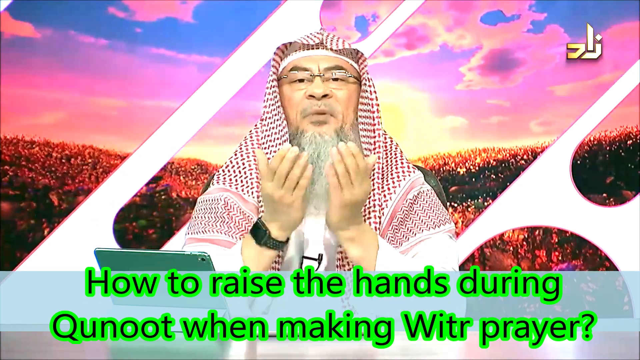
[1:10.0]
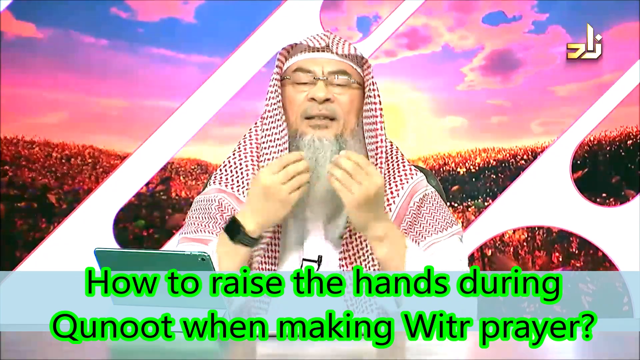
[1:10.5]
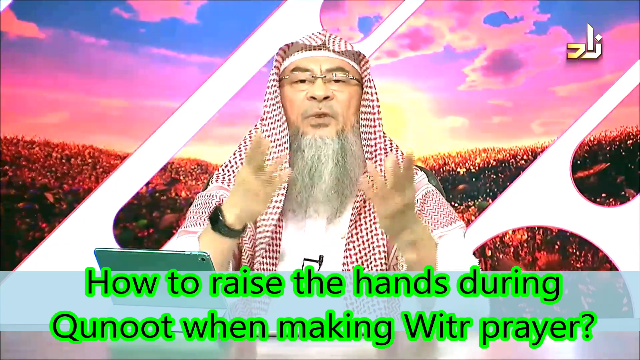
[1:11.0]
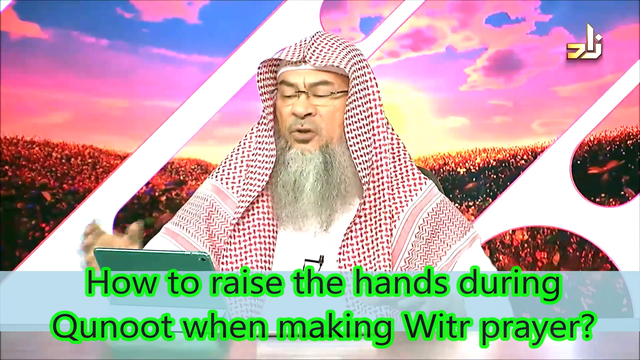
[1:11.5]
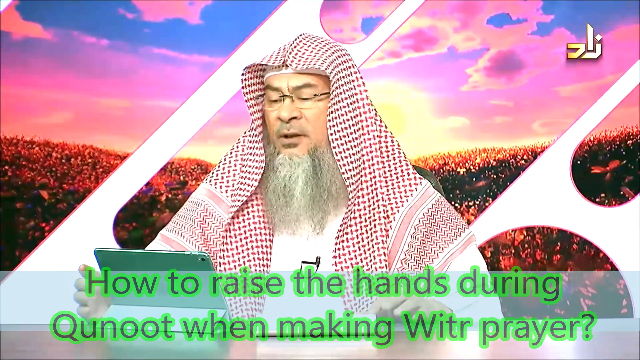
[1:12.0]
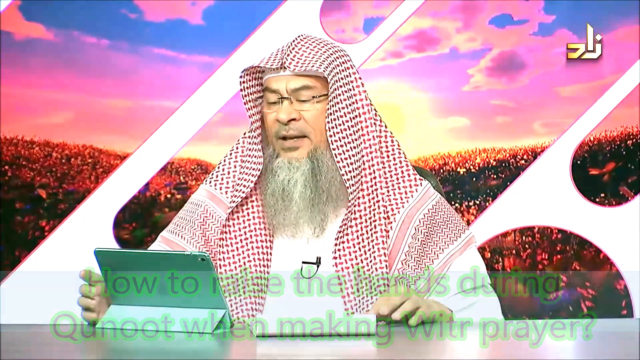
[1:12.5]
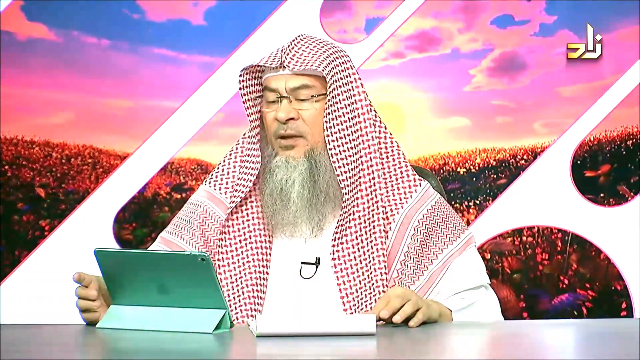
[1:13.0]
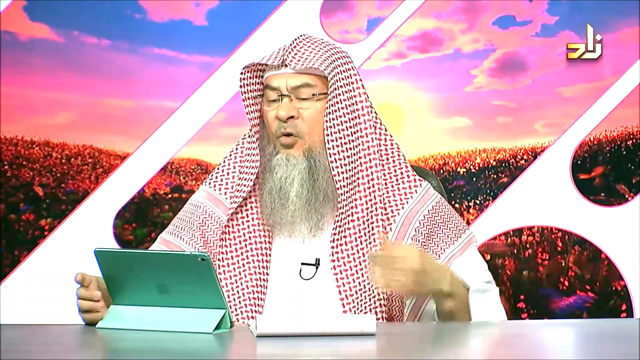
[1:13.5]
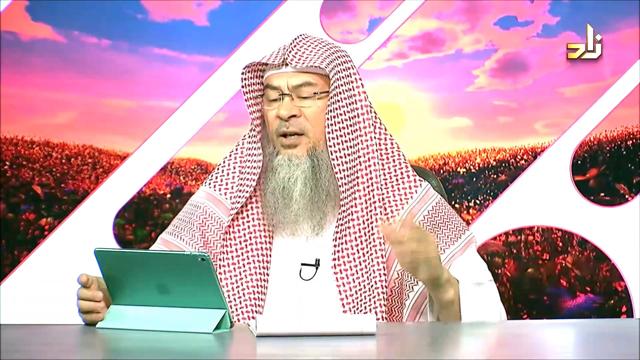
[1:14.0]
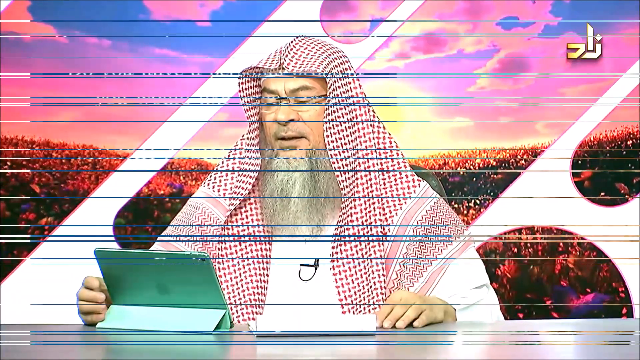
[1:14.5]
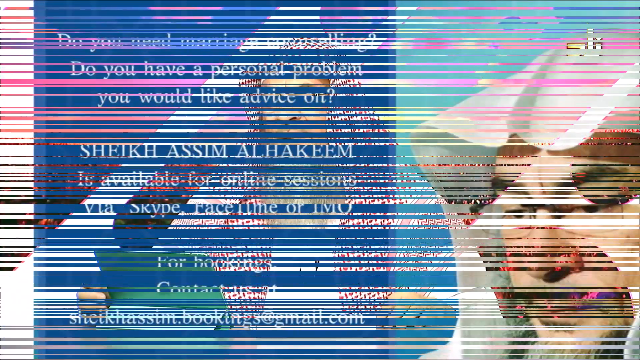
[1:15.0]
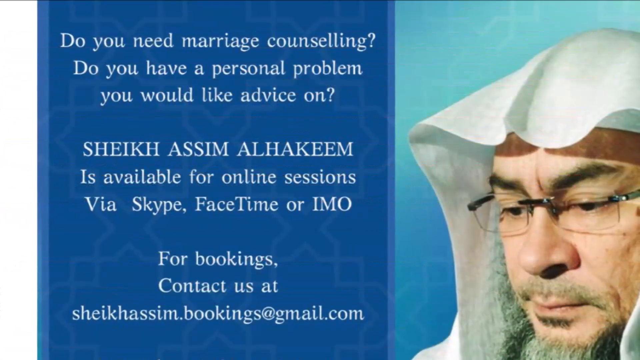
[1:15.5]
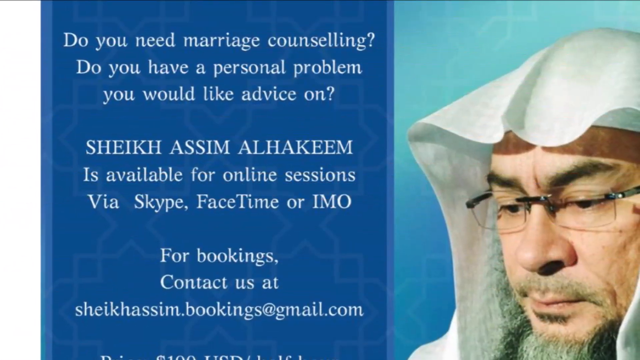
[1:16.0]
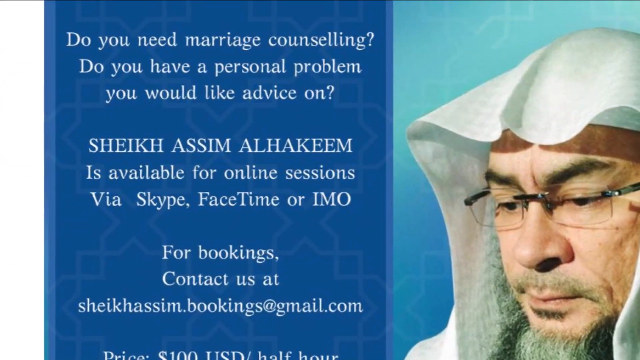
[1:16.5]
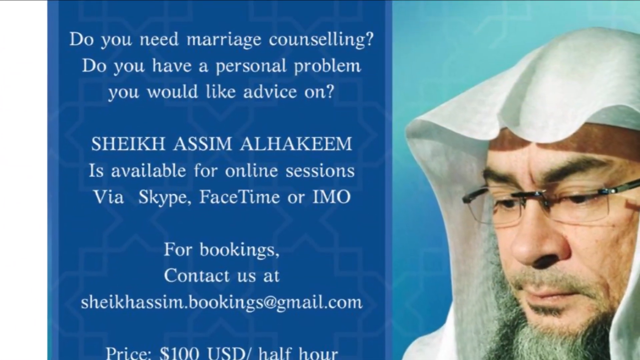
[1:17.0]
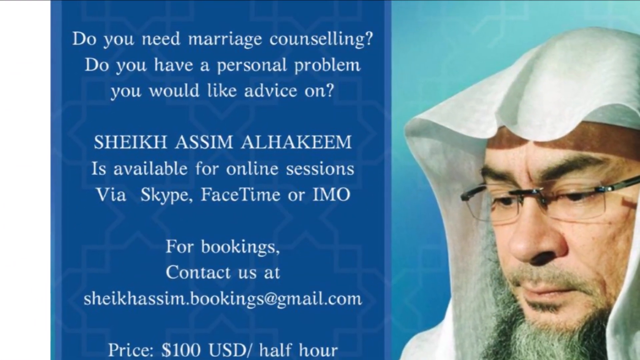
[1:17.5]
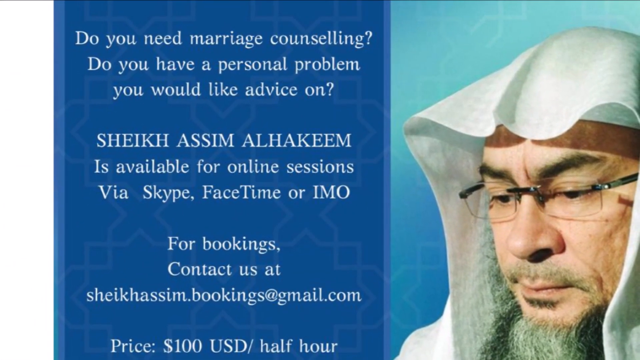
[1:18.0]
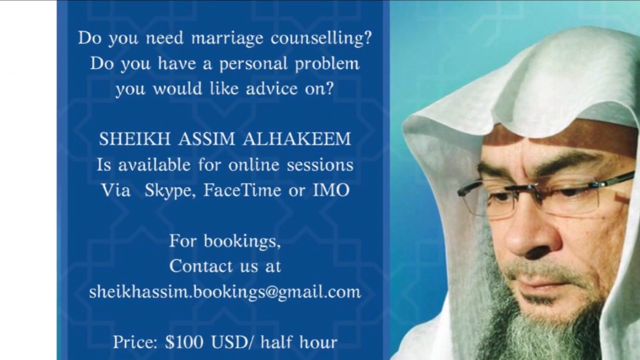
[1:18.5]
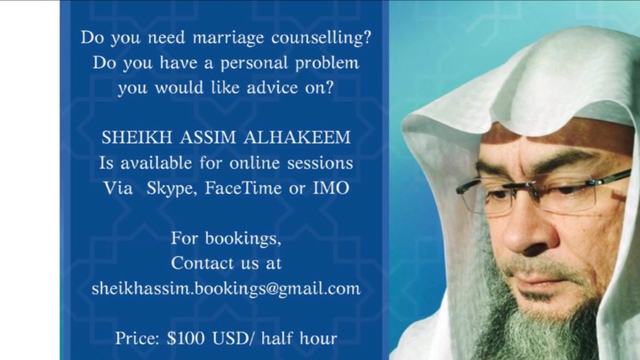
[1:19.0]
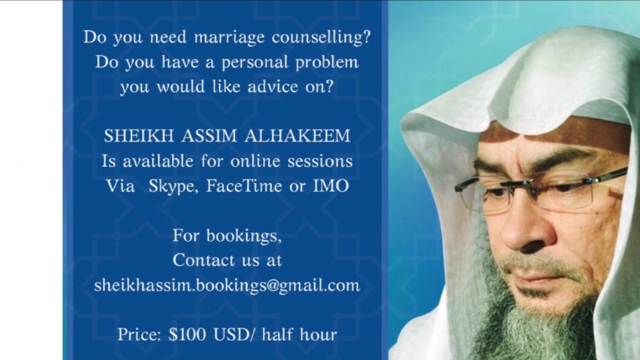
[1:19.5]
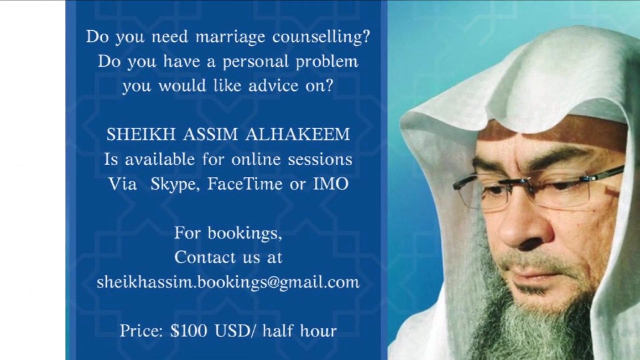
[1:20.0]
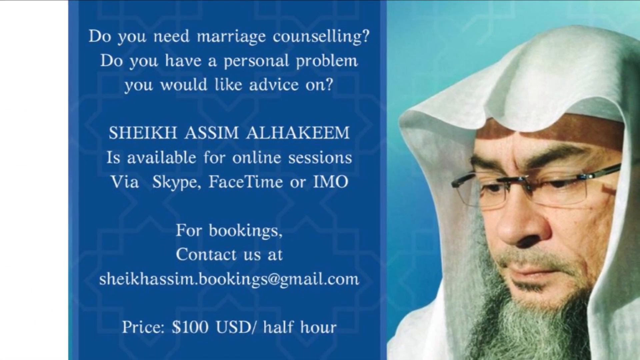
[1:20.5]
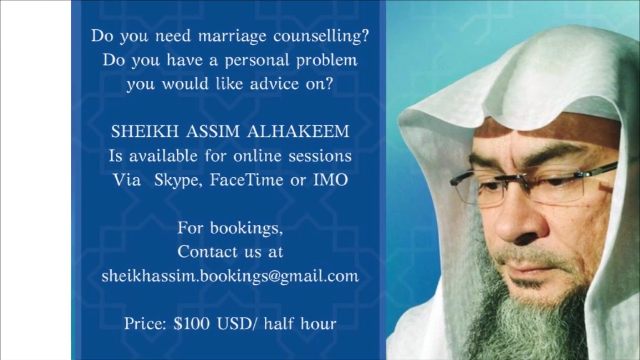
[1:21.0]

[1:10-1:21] The sheikh seems to have finished answering the question, as he lowers his hands. He flicks his hand and goes back to the iPad, presumably to read about the next question, and the question at the bottom of the screen disappears. The video then cuts to a blue screen with the same photo of the man on the right side and text that reads "do you need marriage counseling? Do you have a personal problem you would like advice on? Sheikh Hasim Al-Hakim is available for online sessions via Skype, FaceTime, or IMO. For bookings, contact us at Sheikhassim.Bookings at gmail.com."